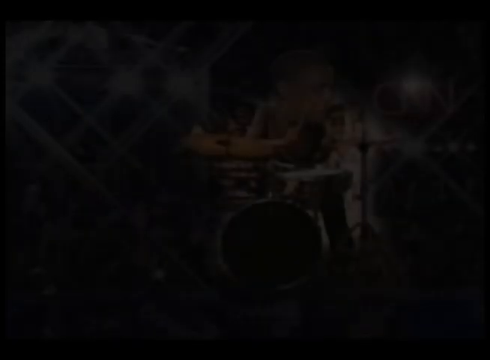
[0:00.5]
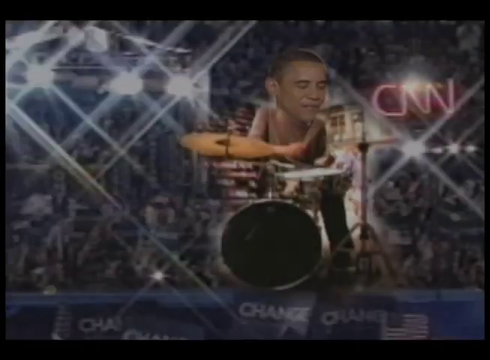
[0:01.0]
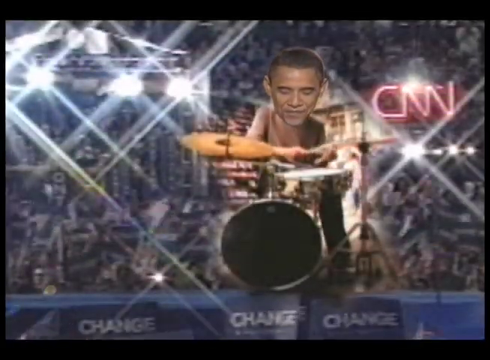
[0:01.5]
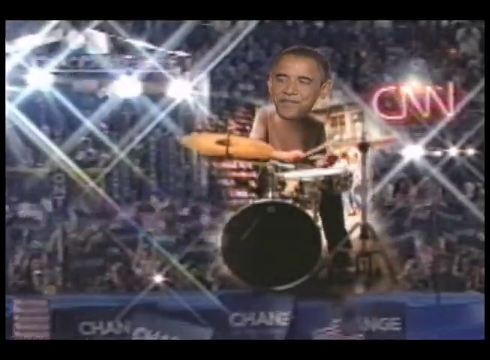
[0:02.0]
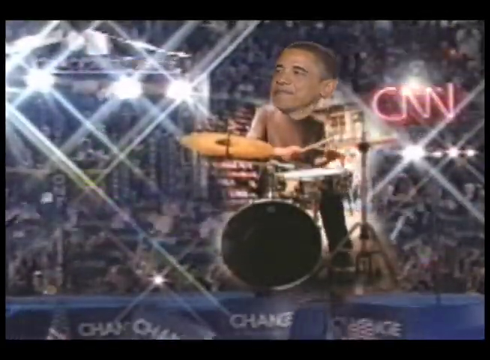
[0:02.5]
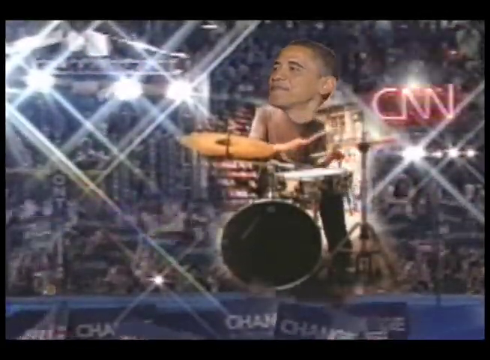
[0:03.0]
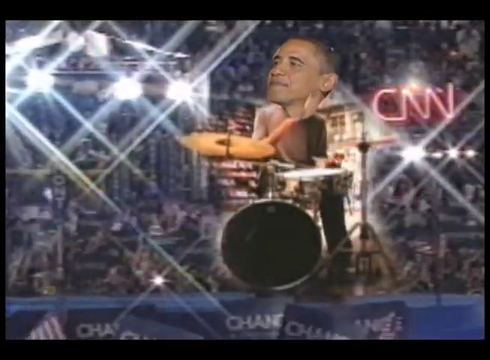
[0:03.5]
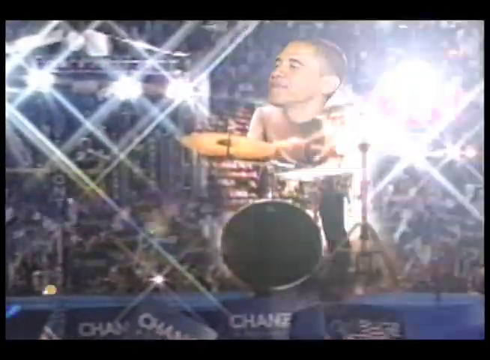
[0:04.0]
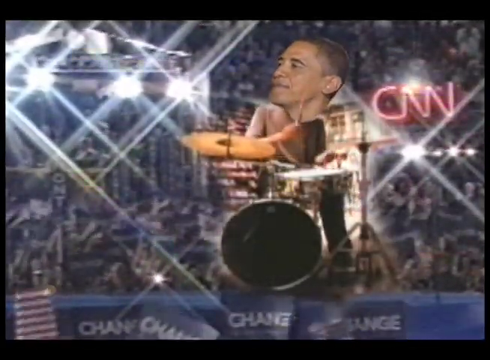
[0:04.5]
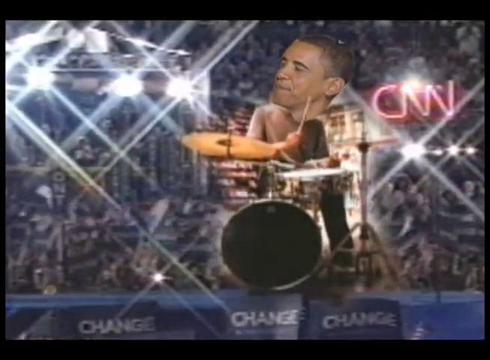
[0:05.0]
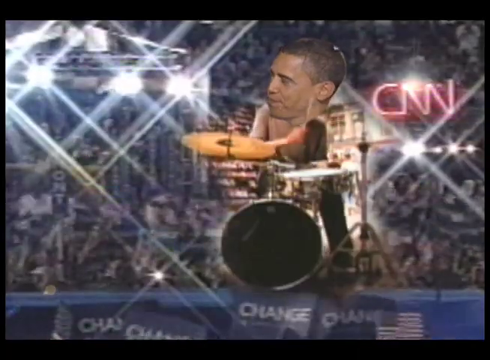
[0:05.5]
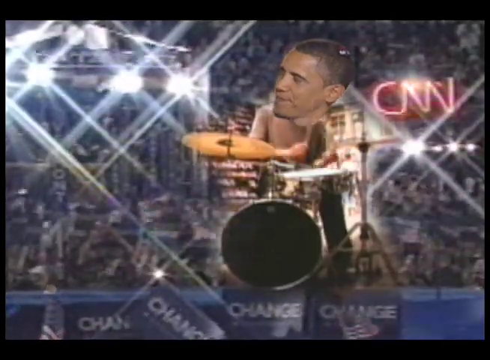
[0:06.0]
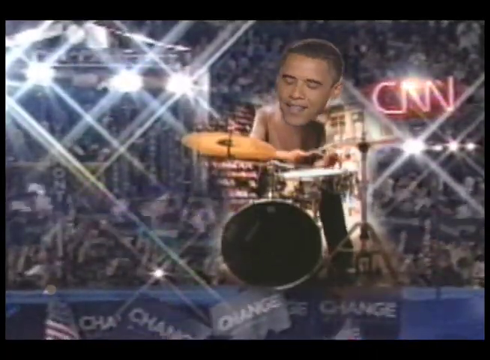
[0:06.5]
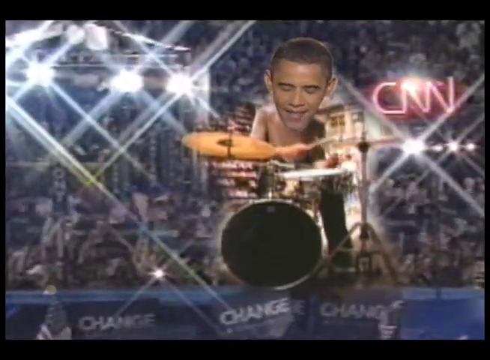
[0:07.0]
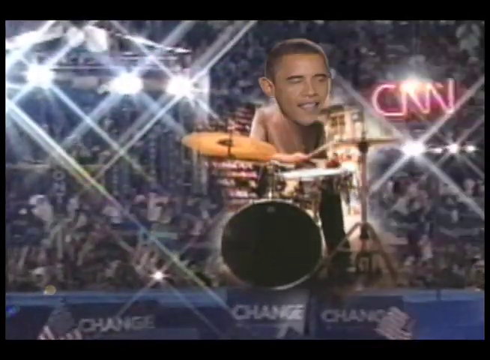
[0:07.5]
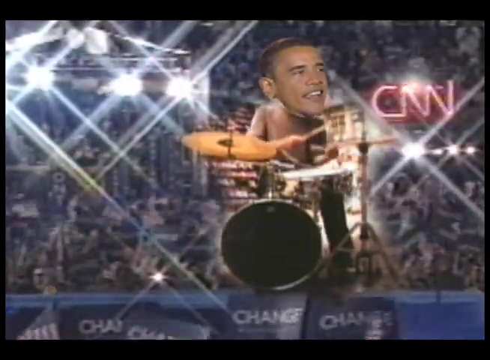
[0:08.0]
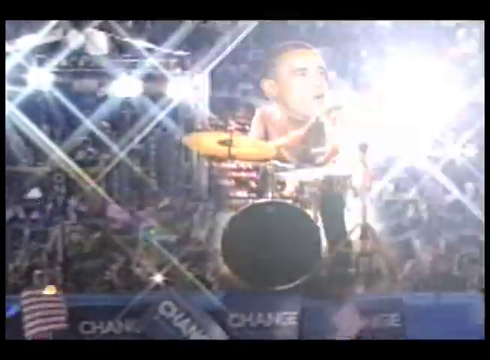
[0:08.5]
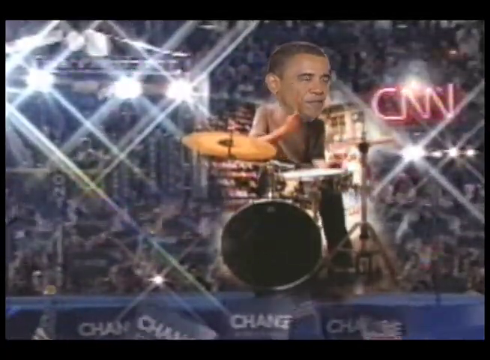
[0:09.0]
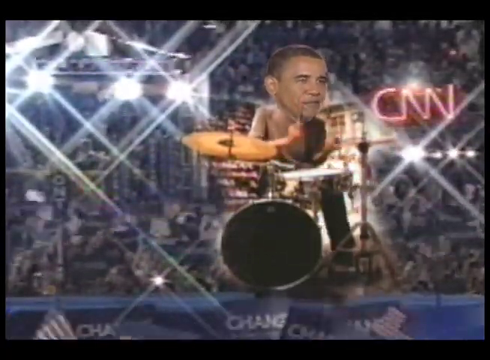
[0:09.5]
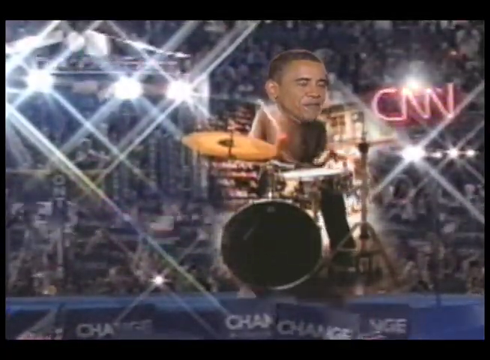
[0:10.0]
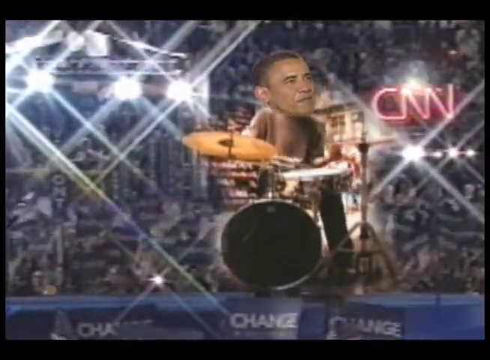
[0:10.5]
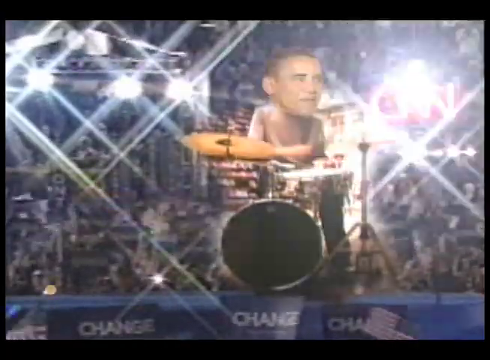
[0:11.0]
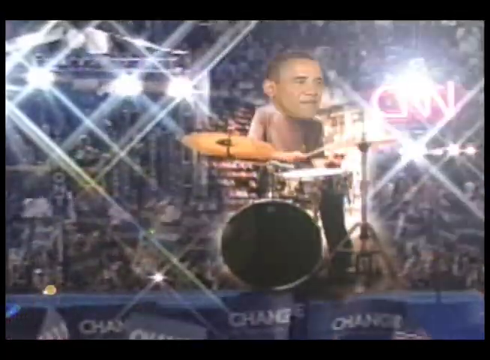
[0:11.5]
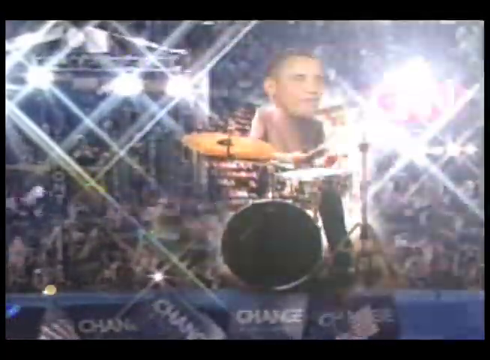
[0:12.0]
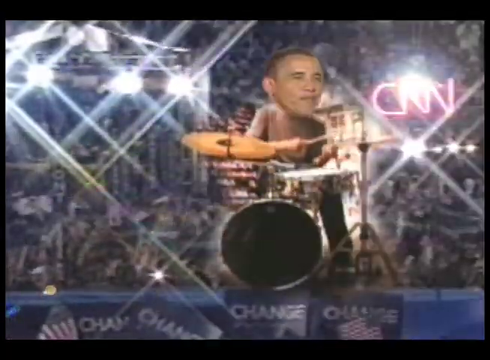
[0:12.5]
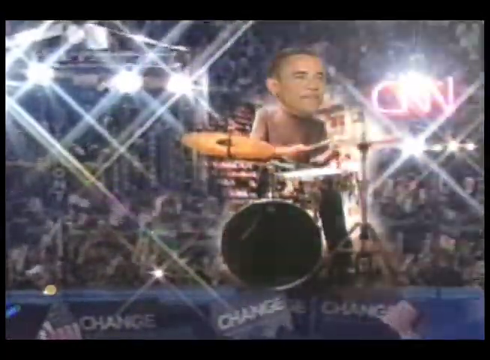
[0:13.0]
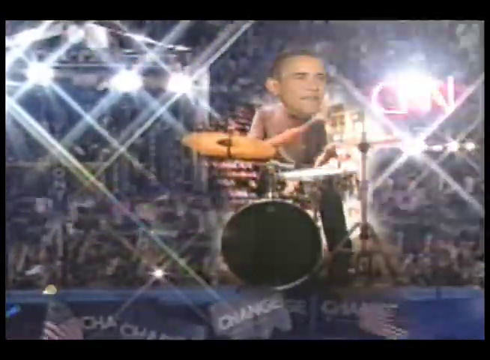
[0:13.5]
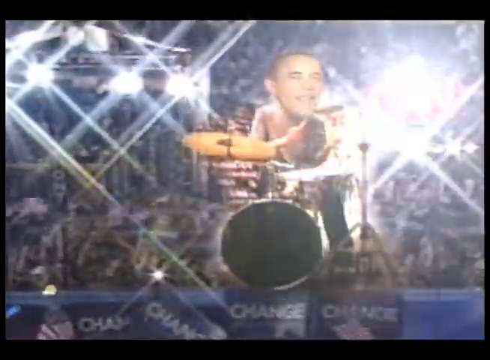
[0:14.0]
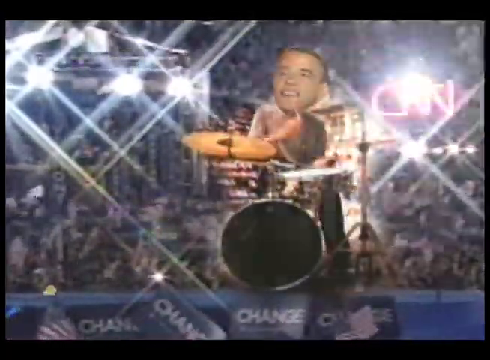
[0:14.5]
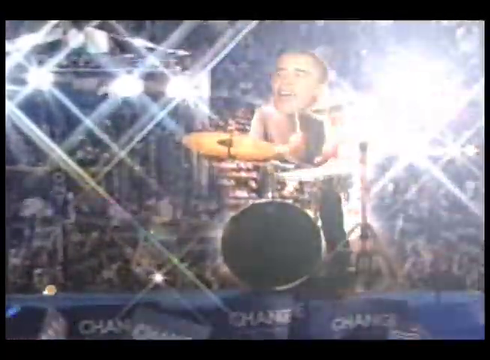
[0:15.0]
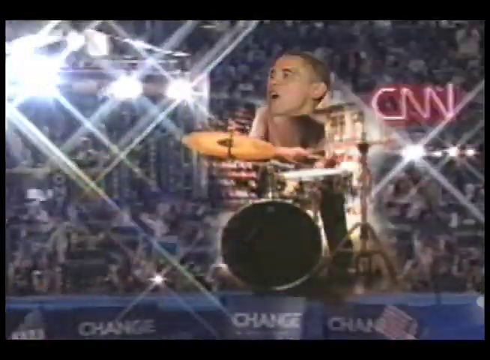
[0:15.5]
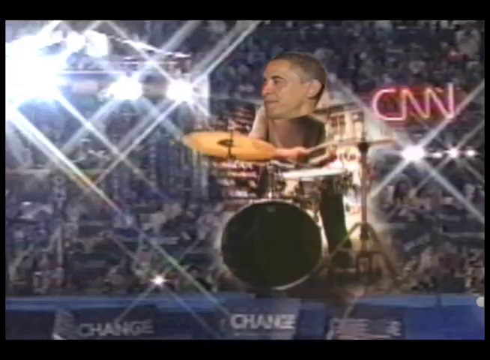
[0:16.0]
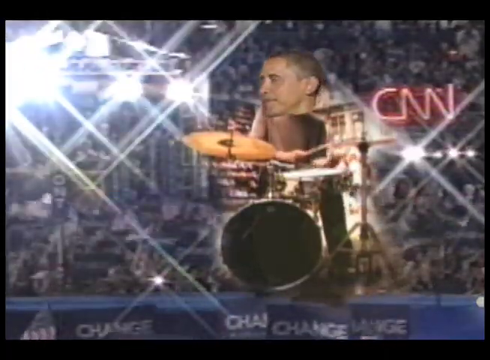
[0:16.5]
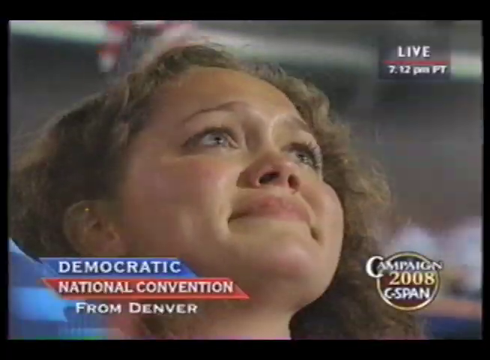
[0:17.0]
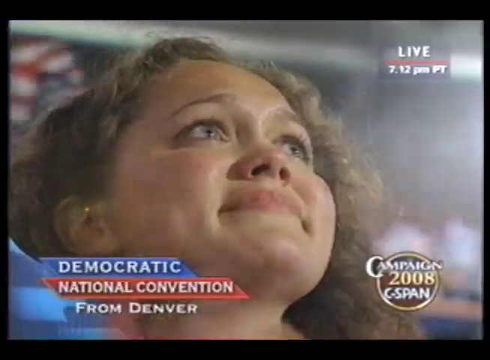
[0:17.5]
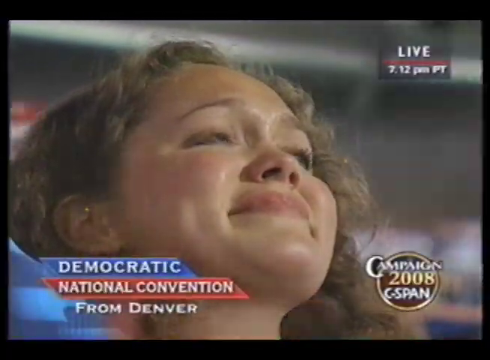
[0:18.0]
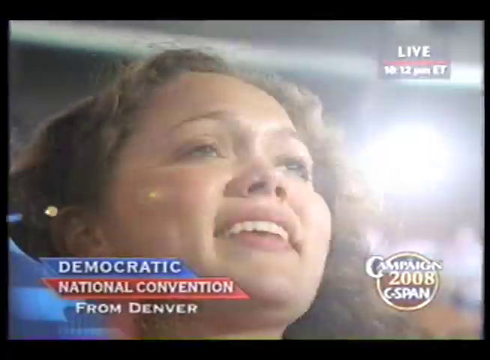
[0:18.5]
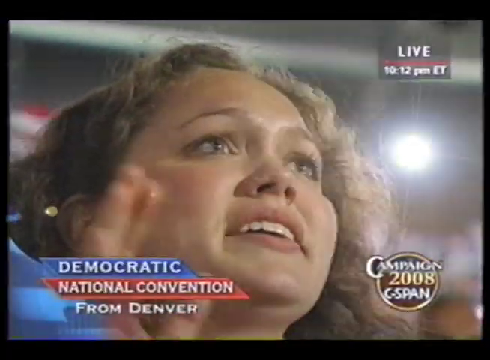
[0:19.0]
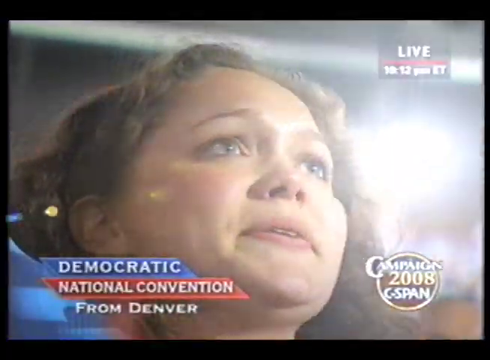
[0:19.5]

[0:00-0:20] Obama appears to be playing the drums, but he is not actually playing; it looks like his head has been put on top of a drummer image. The scene is meant to be at the Democratic National Convention. There are a lot of bright lights in the background, and he is on a stage. People in the audience wave flags, and a neon CNN sign is in the background. A woman is shown close up; she looks very moved and emotional as she looks up at him. The video cuts to Joe Biden, who watches the pretend drumming, claps along and looks very happy. Obama looks very pleased and looks around at the audience. The view then seems to be from among a crowd at the Democratic National Convention in Denver, as a banner of text along the bottom indicates. Among the flags, signs that say "change" are held up. It is kind of a concert-type environment.